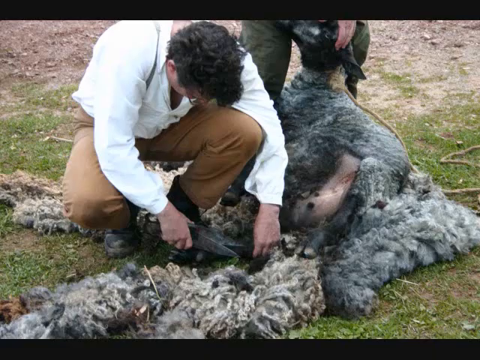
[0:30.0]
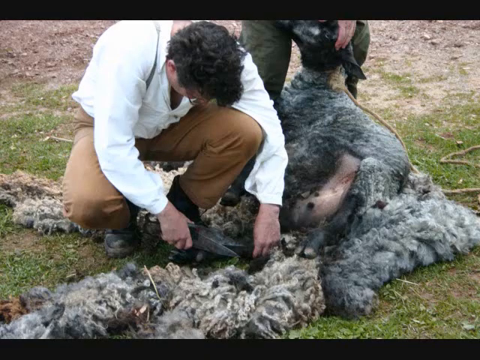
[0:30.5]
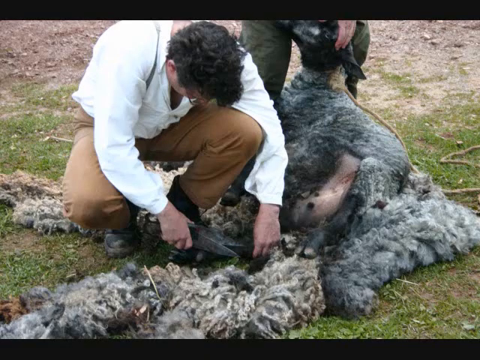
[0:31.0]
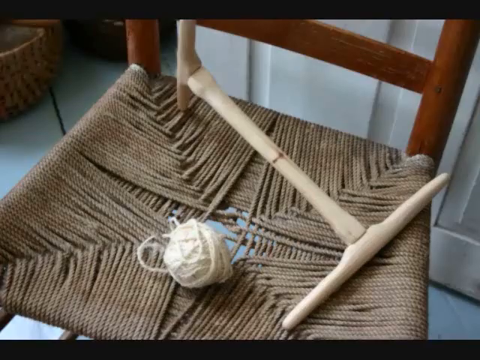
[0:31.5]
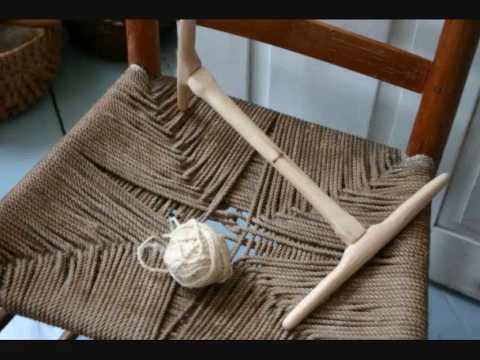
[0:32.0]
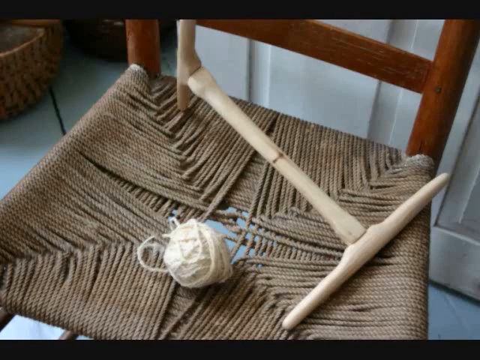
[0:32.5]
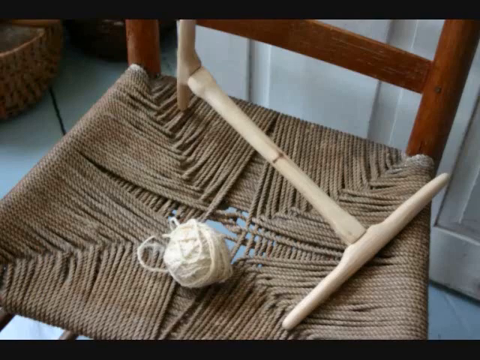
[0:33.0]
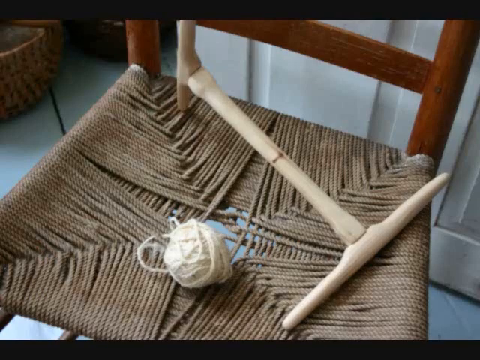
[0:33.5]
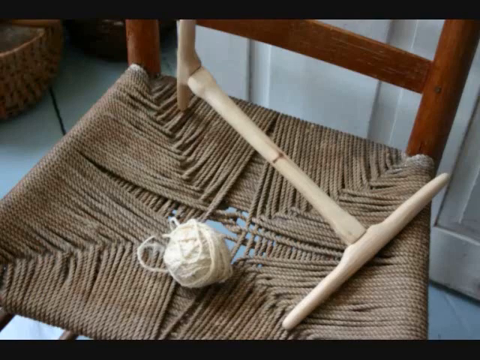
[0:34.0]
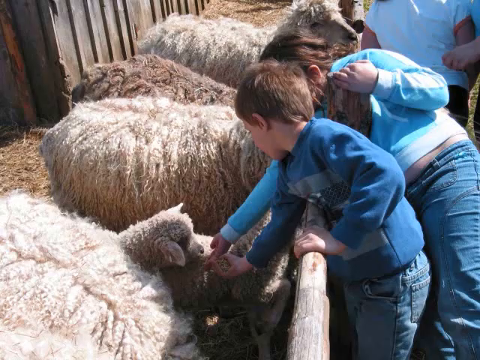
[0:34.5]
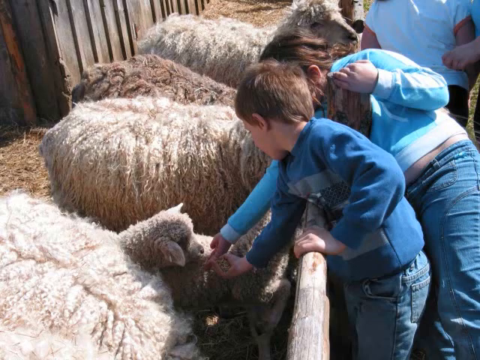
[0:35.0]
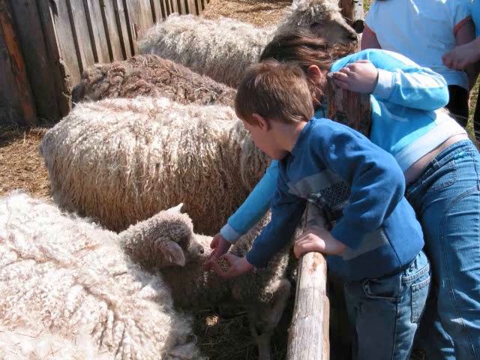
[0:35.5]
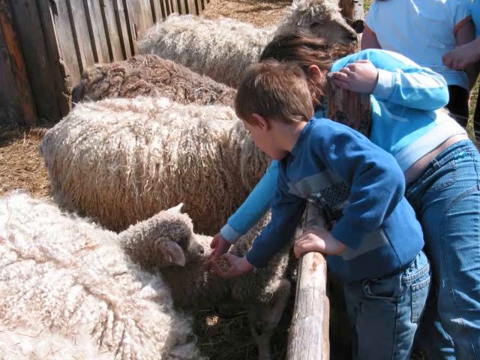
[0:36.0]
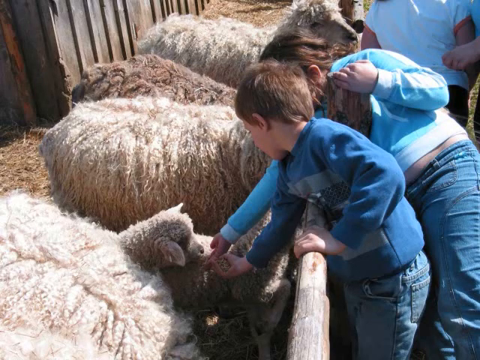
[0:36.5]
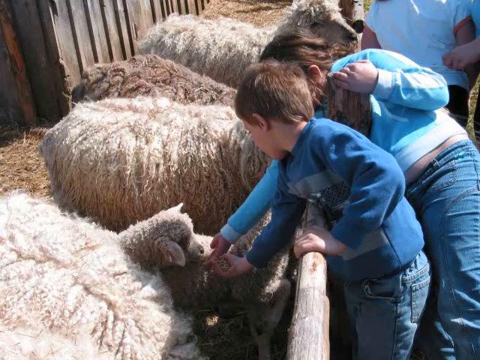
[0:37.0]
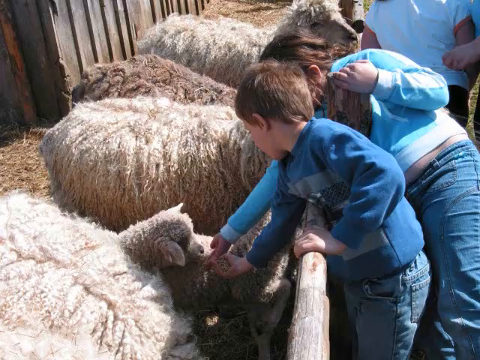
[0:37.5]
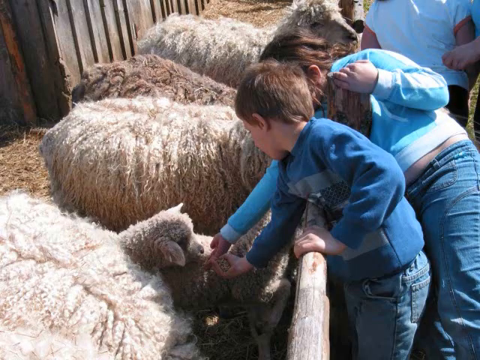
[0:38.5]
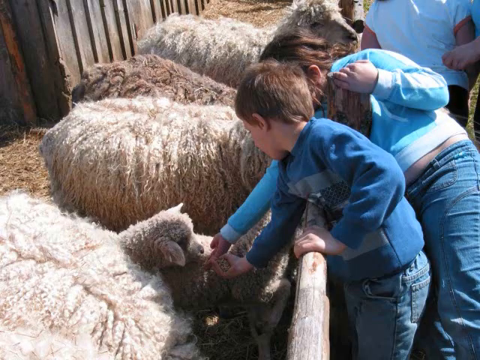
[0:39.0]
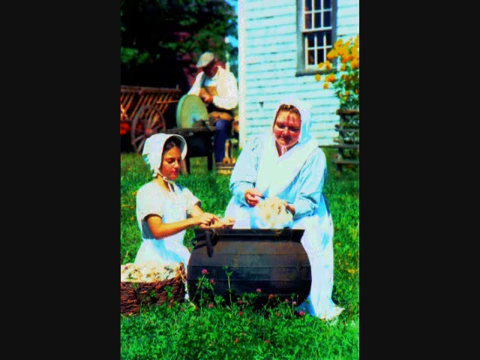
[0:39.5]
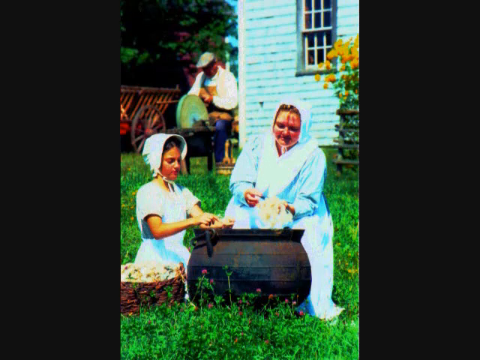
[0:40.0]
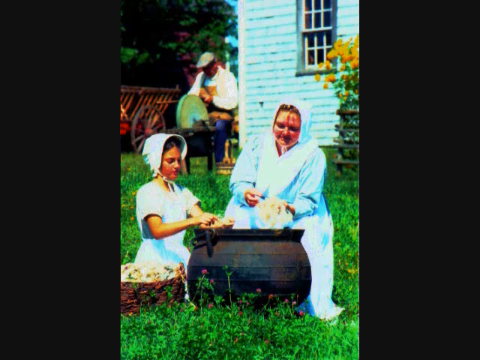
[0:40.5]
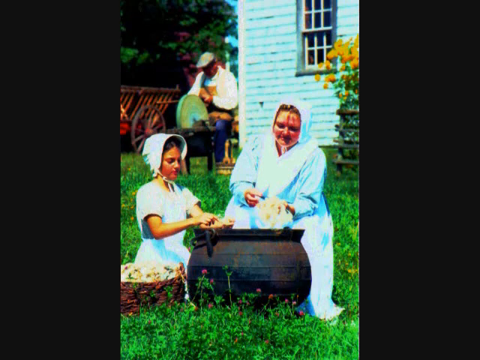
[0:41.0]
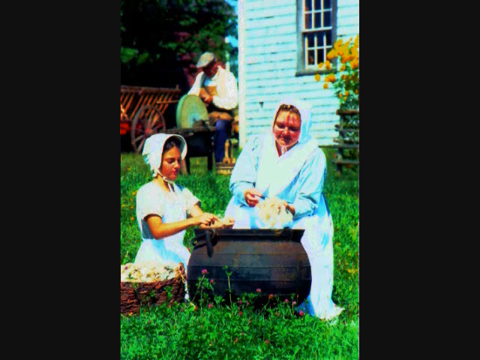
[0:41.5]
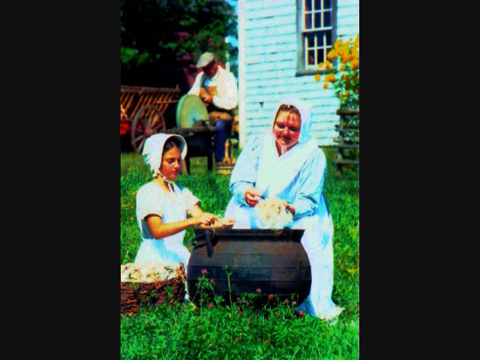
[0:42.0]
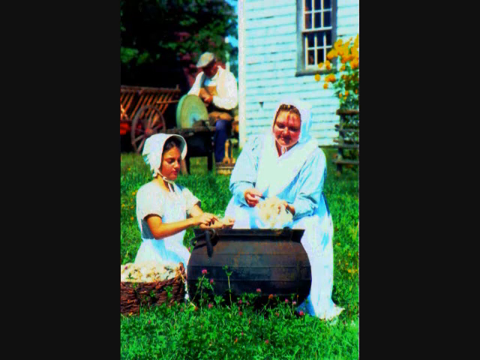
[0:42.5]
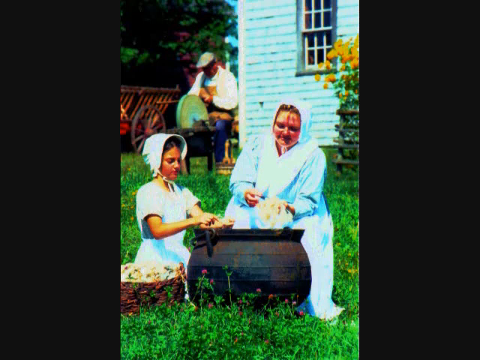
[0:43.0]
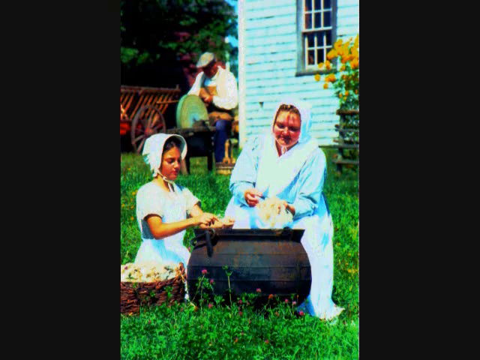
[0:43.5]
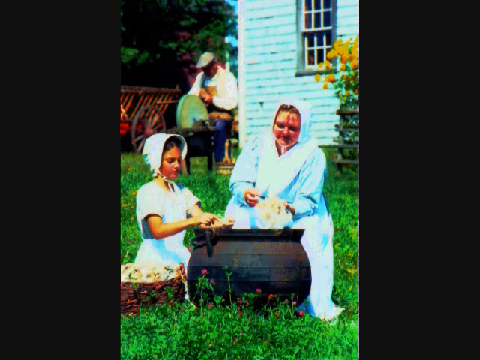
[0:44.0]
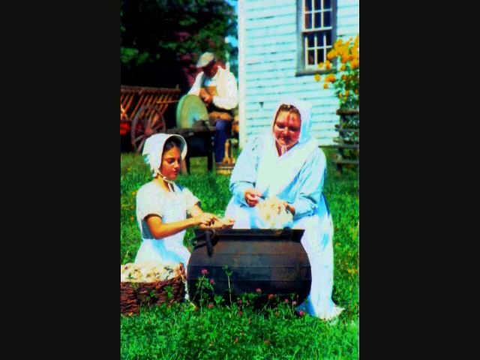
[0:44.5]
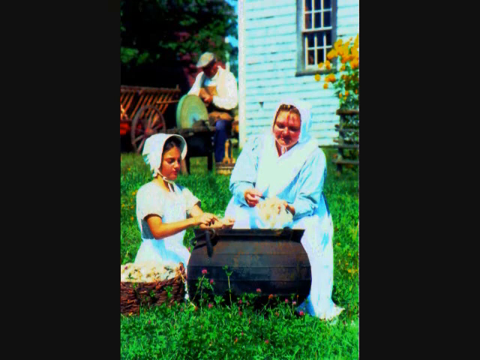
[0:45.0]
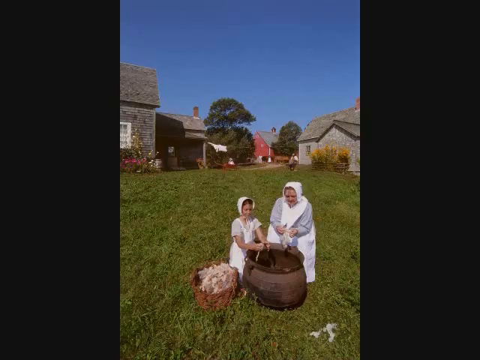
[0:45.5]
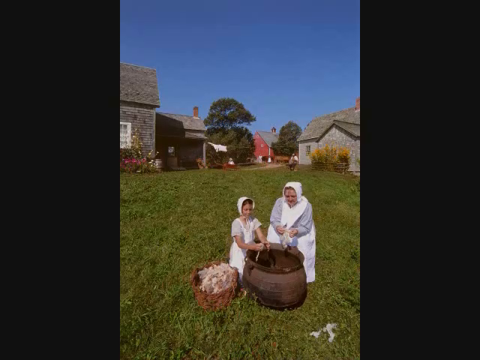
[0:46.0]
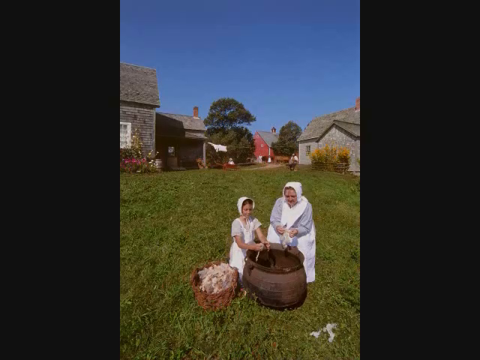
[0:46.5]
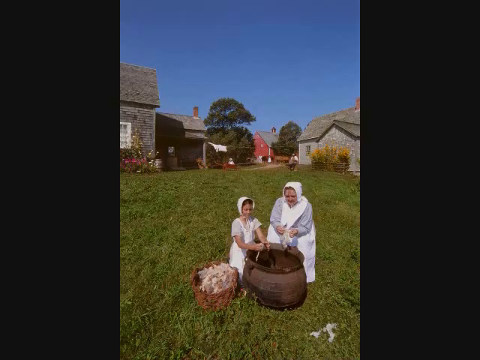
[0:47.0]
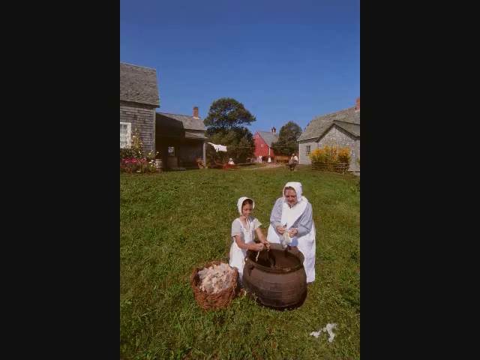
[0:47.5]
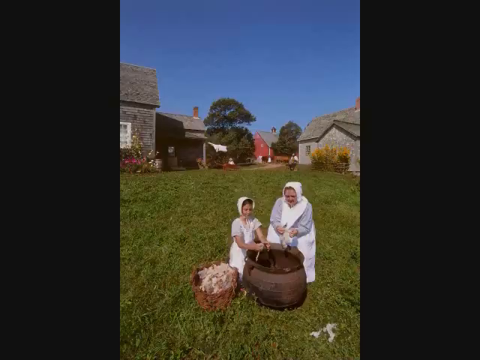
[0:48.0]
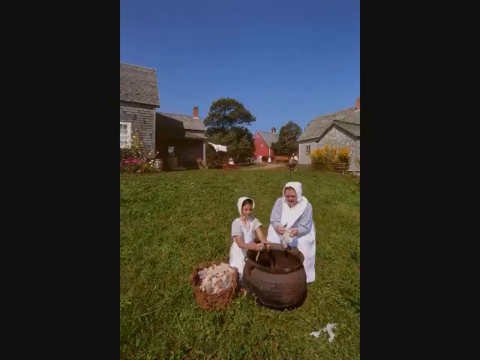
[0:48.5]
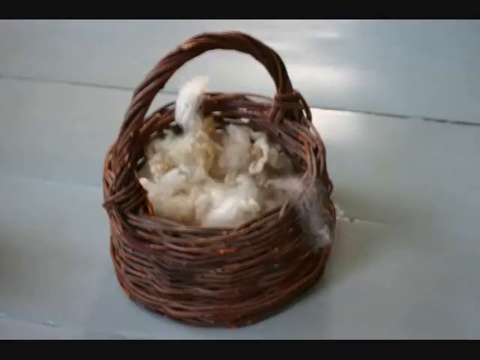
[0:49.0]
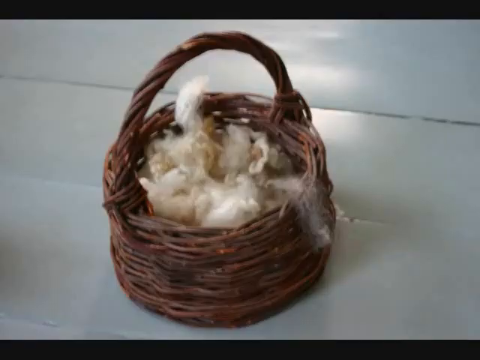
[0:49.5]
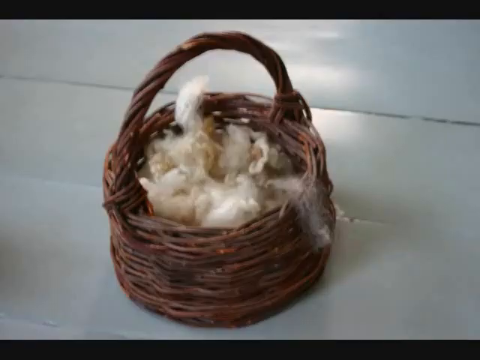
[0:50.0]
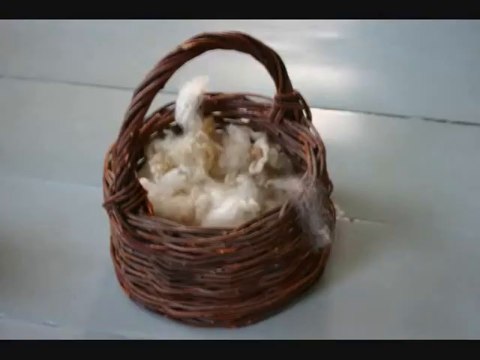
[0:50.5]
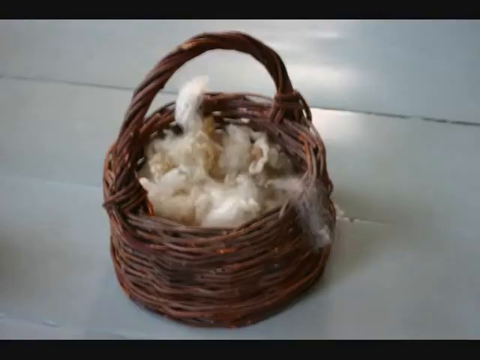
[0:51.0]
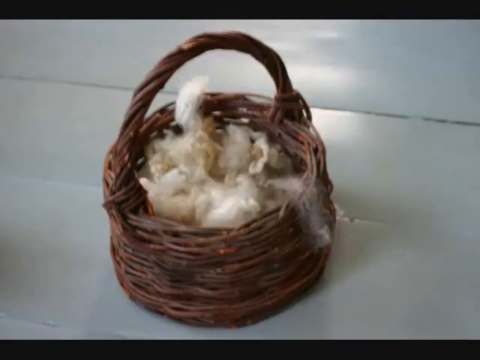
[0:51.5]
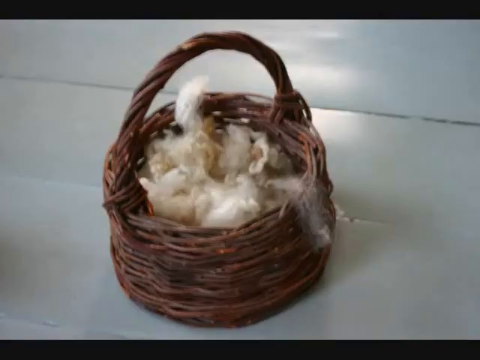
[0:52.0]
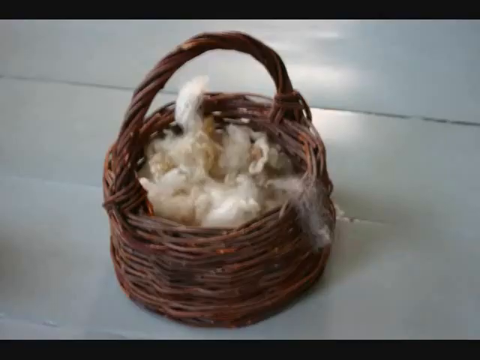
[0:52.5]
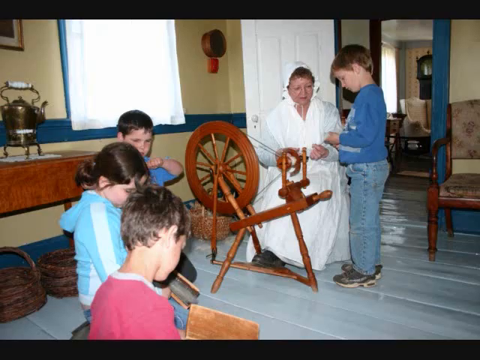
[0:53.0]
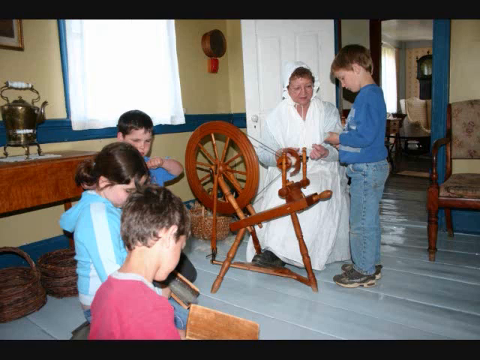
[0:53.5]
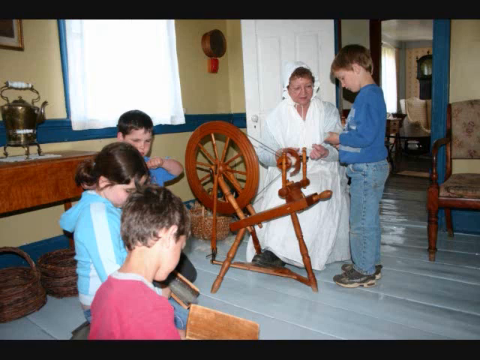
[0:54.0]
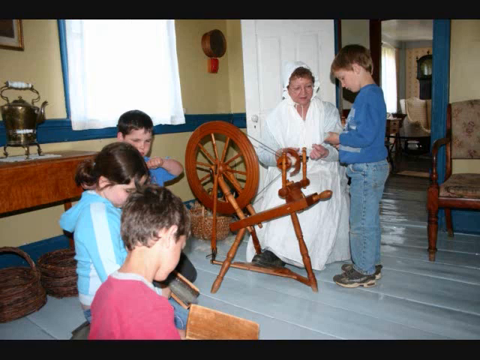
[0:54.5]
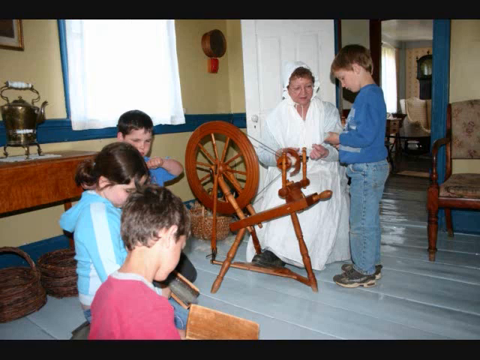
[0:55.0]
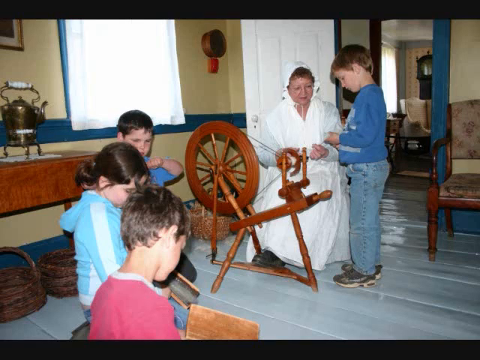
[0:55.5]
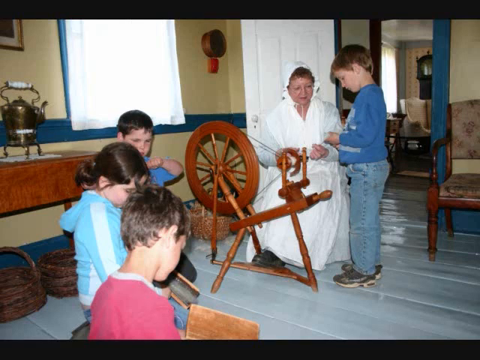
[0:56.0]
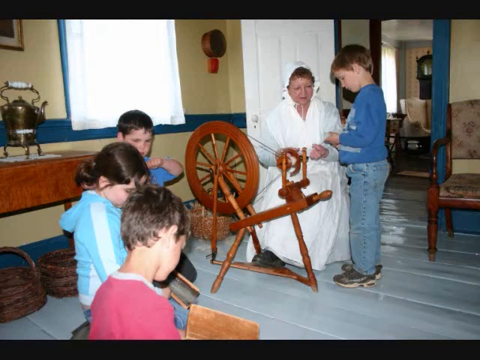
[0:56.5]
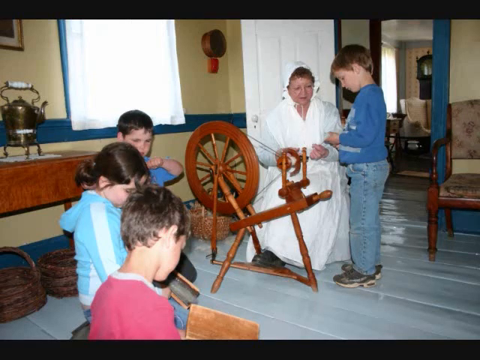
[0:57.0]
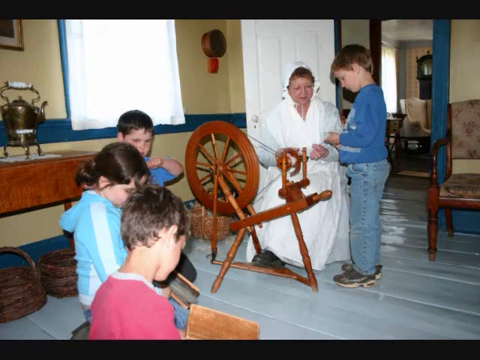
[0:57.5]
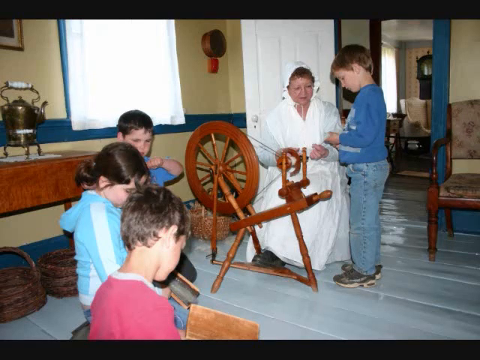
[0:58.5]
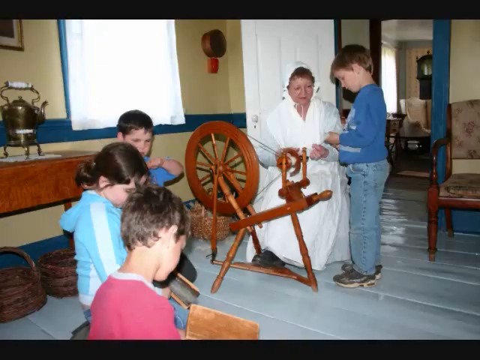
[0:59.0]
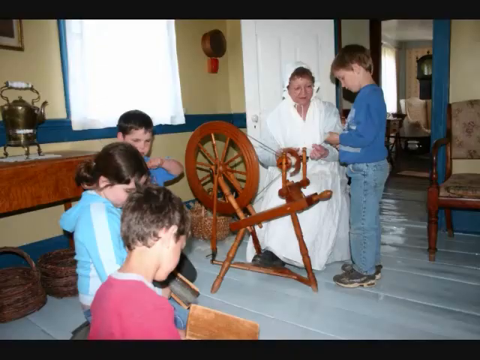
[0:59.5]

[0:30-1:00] Someone with black hair and glasses, wearing a long-sleeved white shirt, tan long pants and boots, is squatting down. A sheep is being held on the ground by another person, whose hand and green pants are visible. The man in white uses a large pair of shears to cut the excess wool off the sheep, and the darker white excess wool lies on the ground. Next, some yarn, presumably from the wool of sheared sheep, is on a handmade chair. There is a light wooden device that looks like an upside-down T, attached to a base.